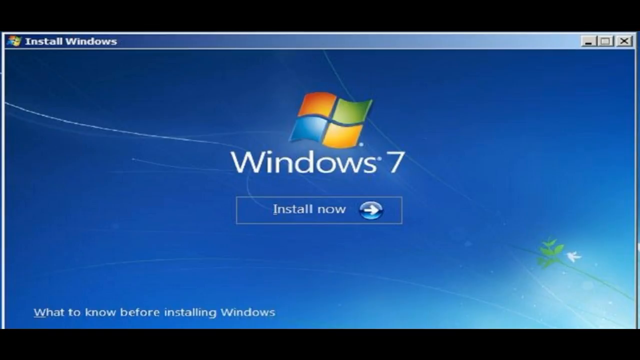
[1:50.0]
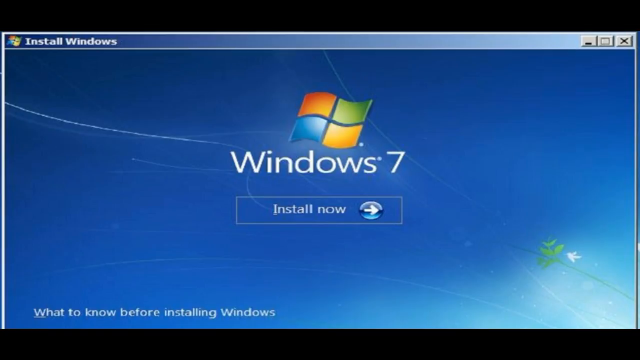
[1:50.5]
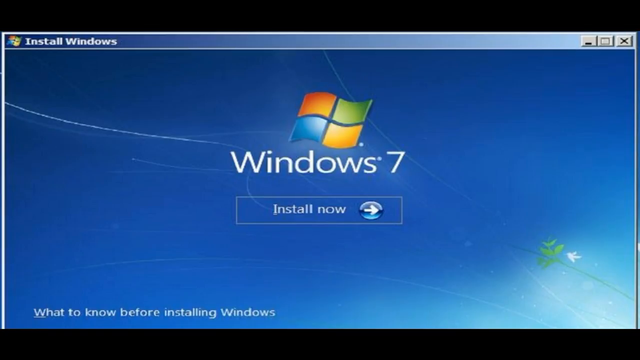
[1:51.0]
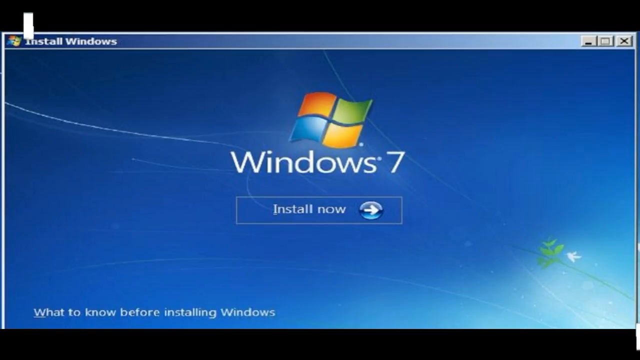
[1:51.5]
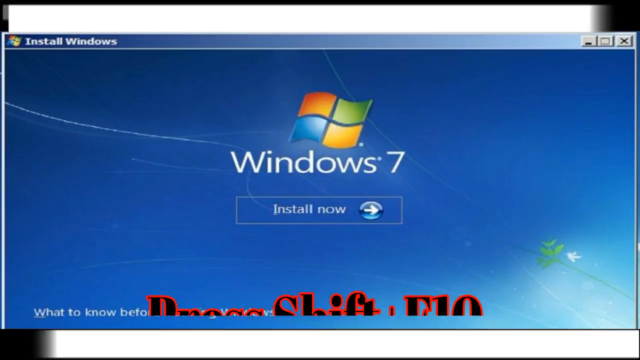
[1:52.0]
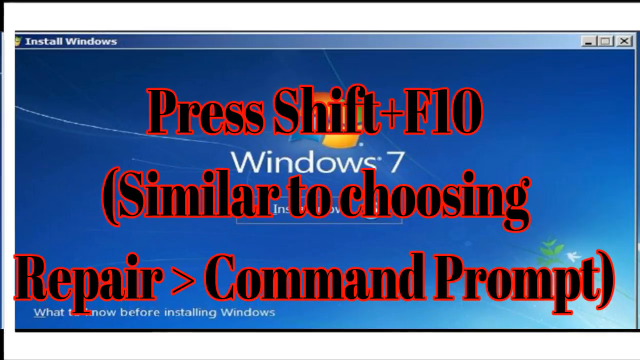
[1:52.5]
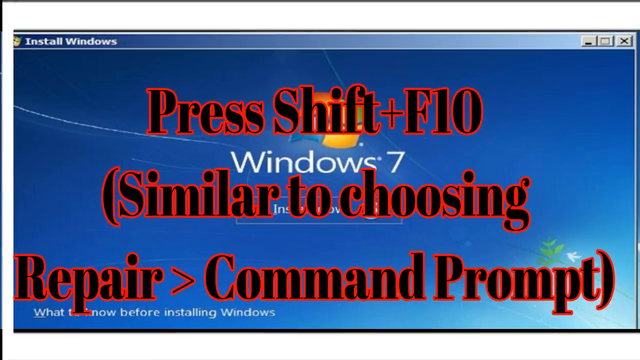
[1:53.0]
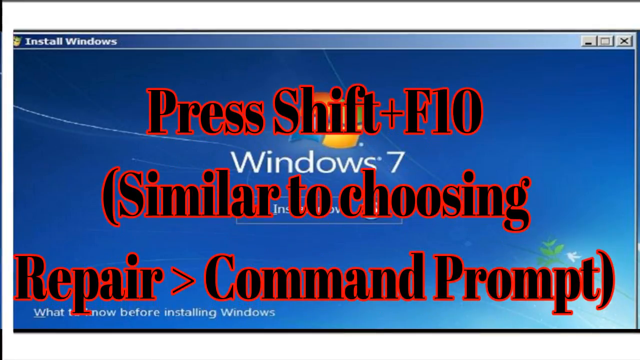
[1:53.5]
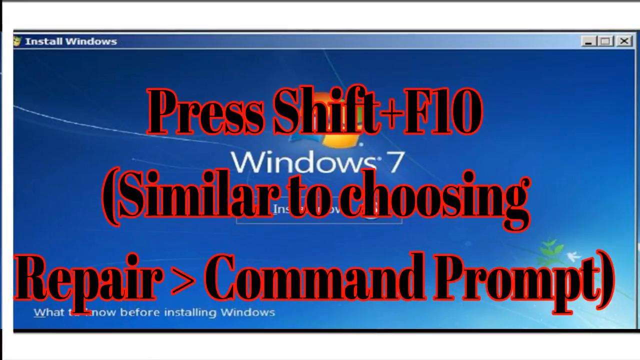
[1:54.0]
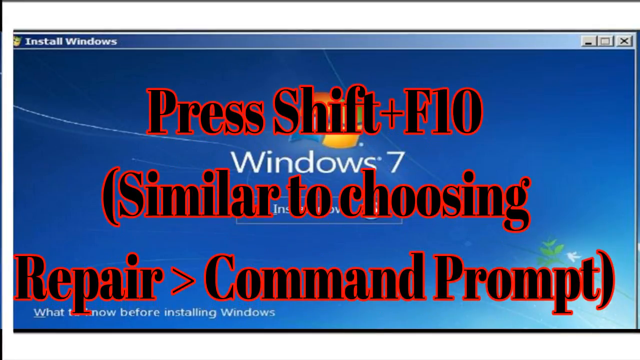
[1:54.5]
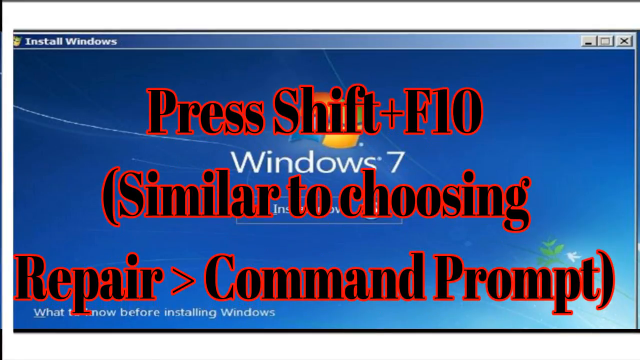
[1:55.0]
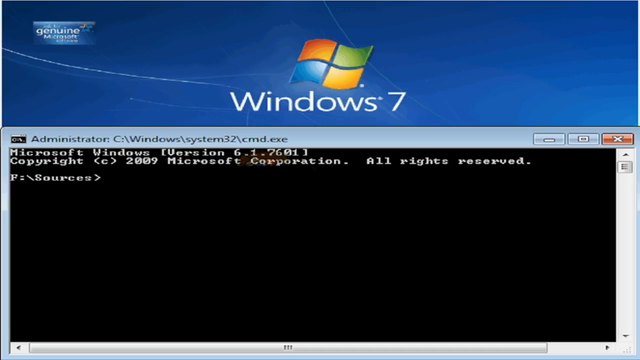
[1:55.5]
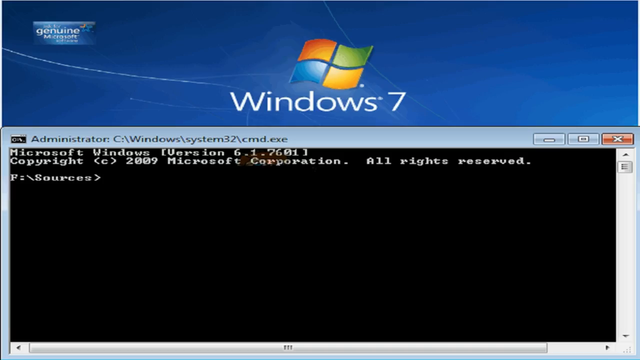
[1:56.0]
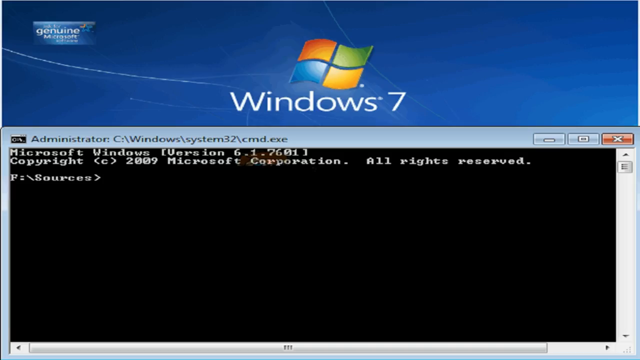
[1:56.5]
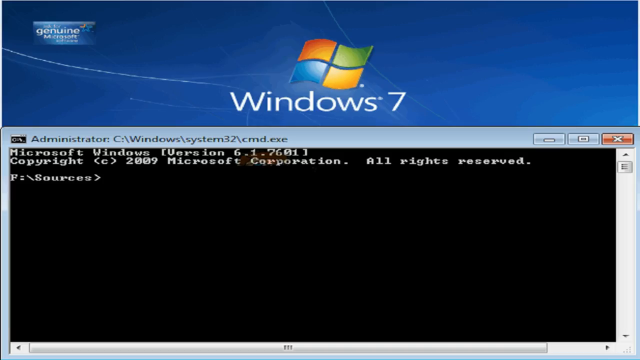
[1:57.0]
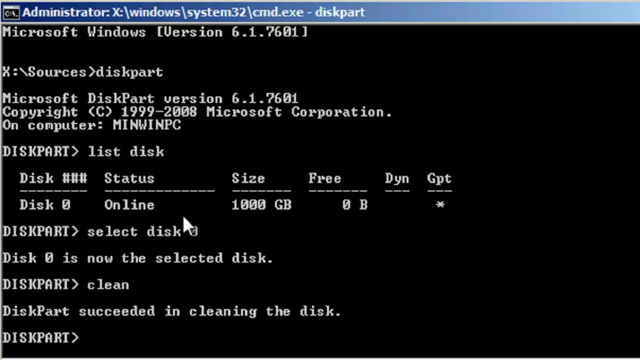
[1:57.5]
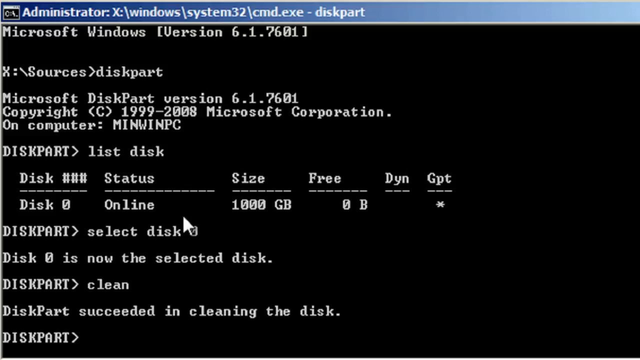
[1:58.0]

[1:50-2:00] A screenshot taken from the Install Windows prompt for Windows 7 shows a button in the centre that says "Install Now", with a round blue button on its right containing a right-facing white arrow. Text appears from below and fills the centre of the screen, in black with a red outline, reading "Press Shift plus F10 (similar to choosing Repair> Command Prompt)". The video then transitions to a screenshot of the CMD Windows control panel, with a black background and white text showing some information about Windows disk part.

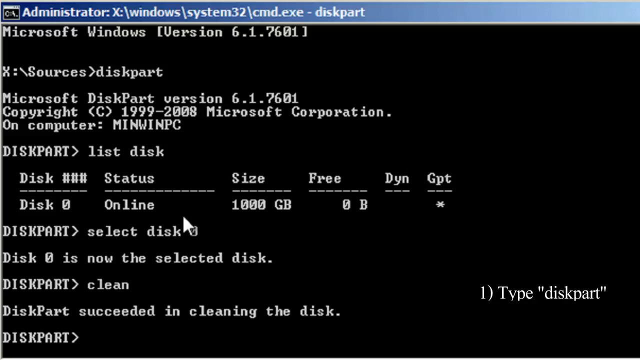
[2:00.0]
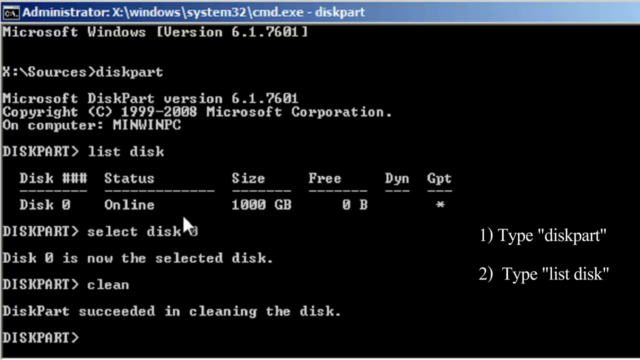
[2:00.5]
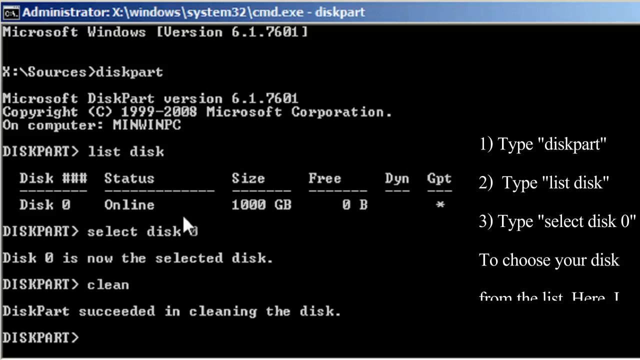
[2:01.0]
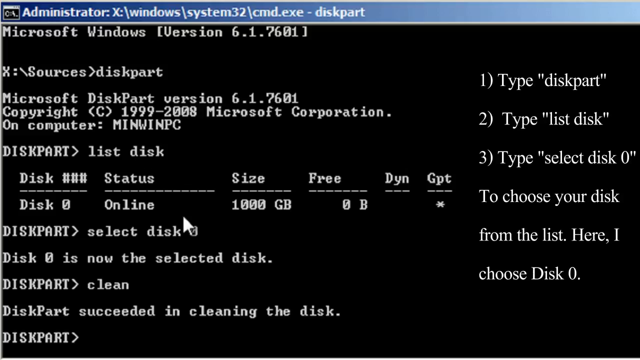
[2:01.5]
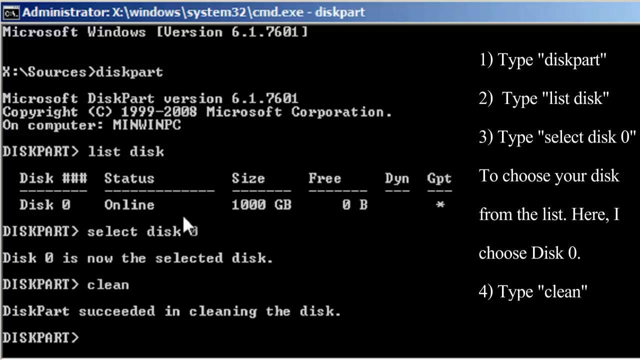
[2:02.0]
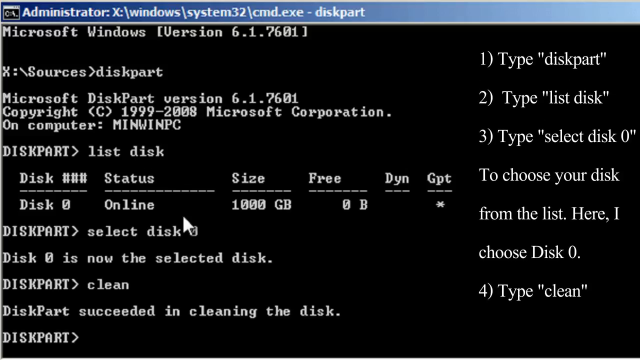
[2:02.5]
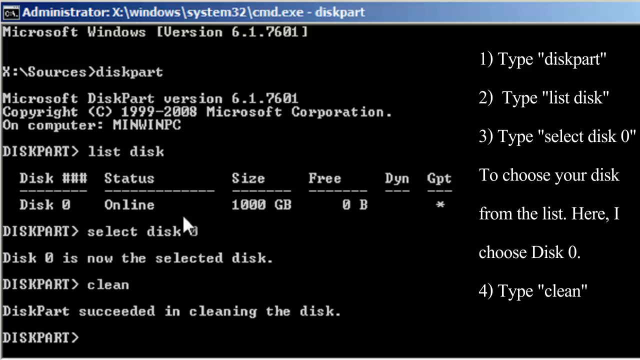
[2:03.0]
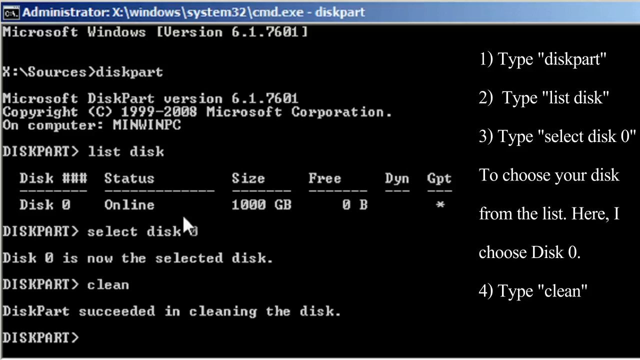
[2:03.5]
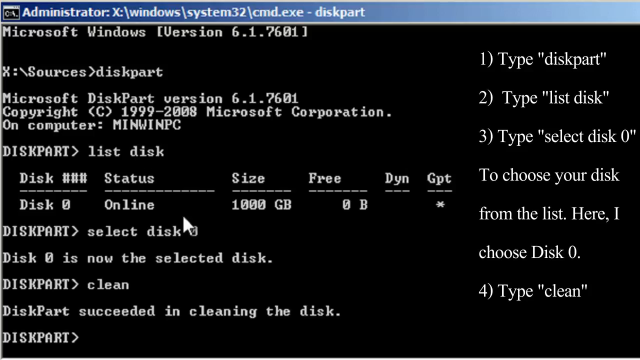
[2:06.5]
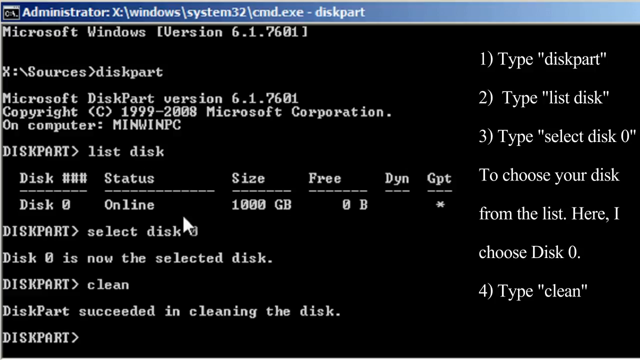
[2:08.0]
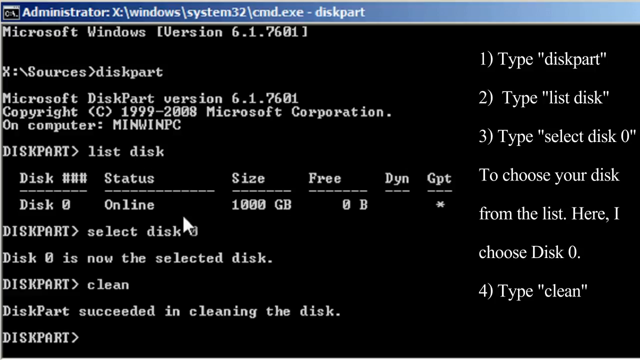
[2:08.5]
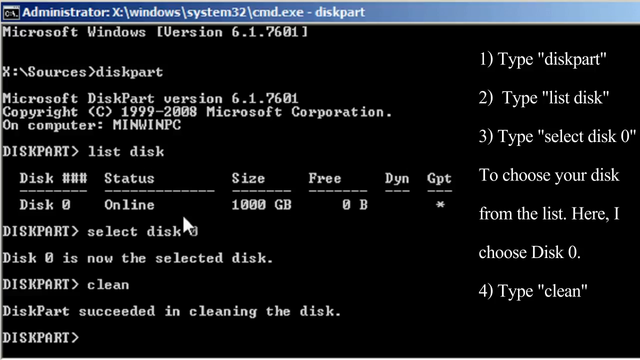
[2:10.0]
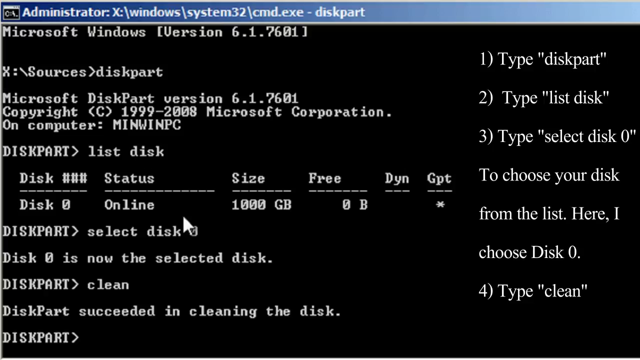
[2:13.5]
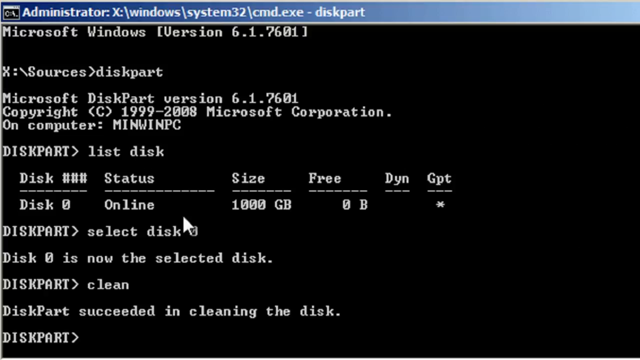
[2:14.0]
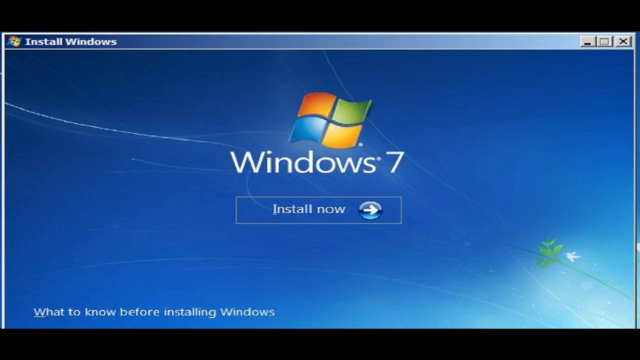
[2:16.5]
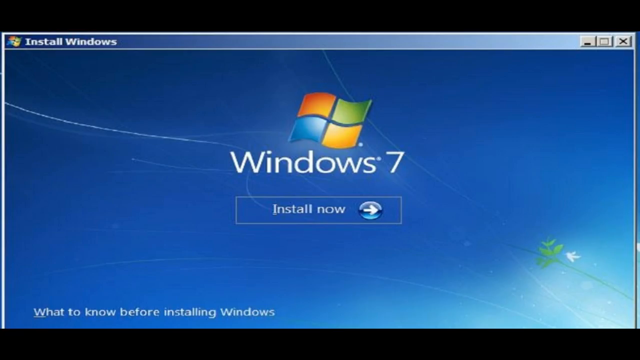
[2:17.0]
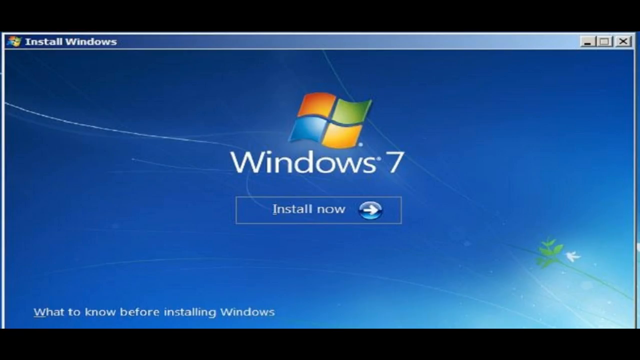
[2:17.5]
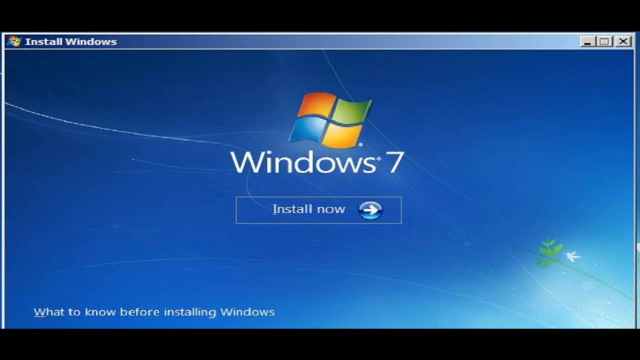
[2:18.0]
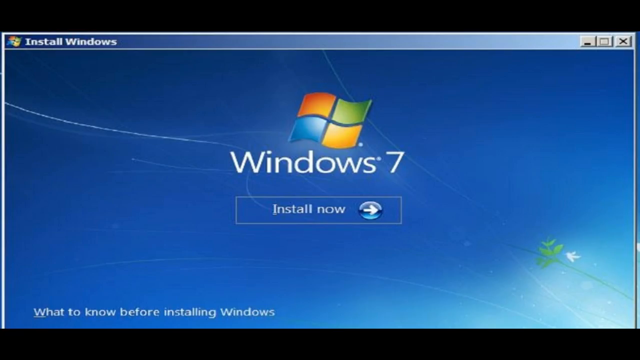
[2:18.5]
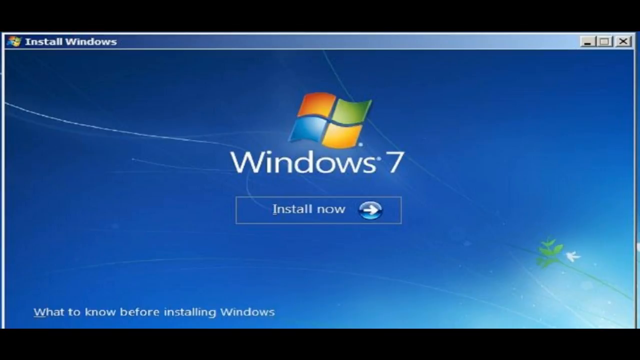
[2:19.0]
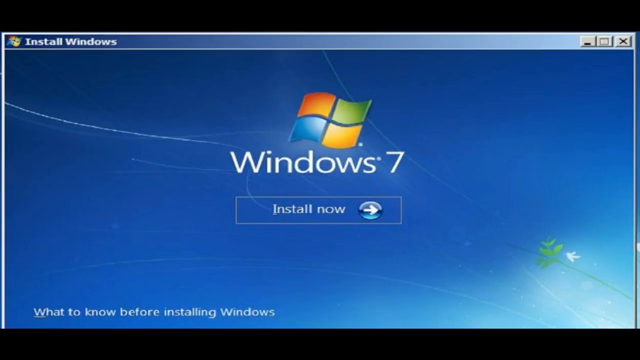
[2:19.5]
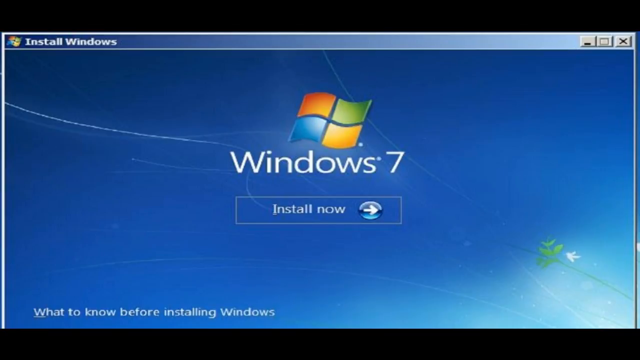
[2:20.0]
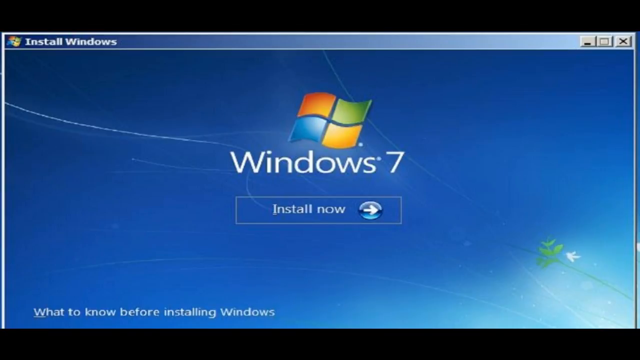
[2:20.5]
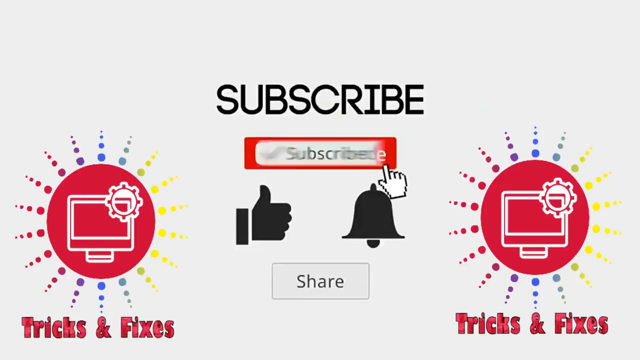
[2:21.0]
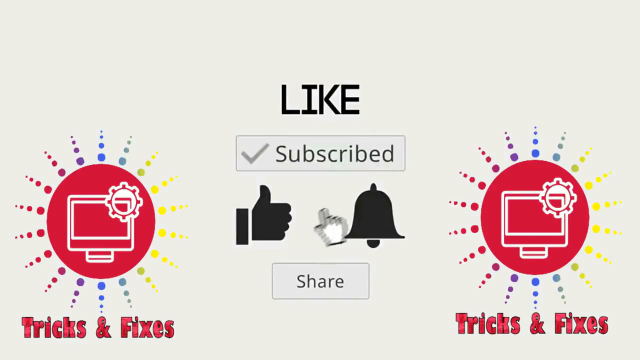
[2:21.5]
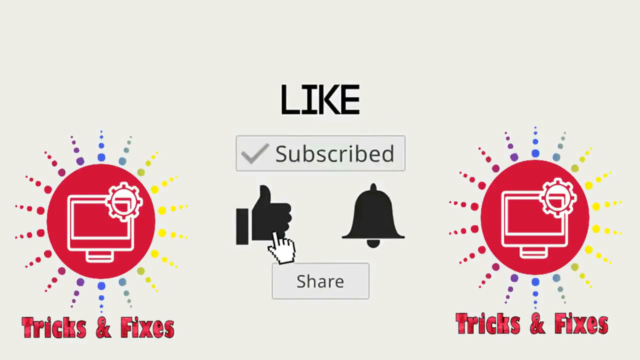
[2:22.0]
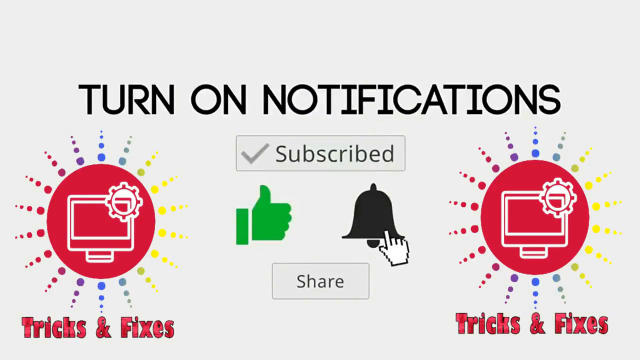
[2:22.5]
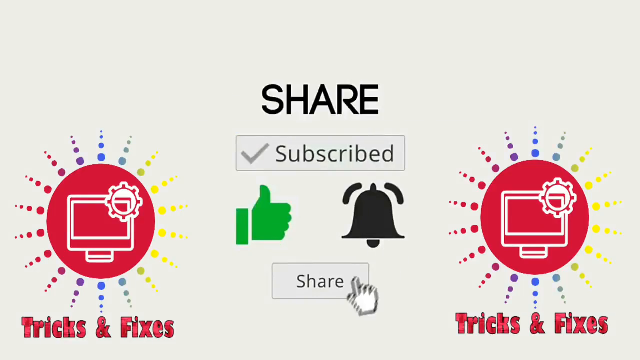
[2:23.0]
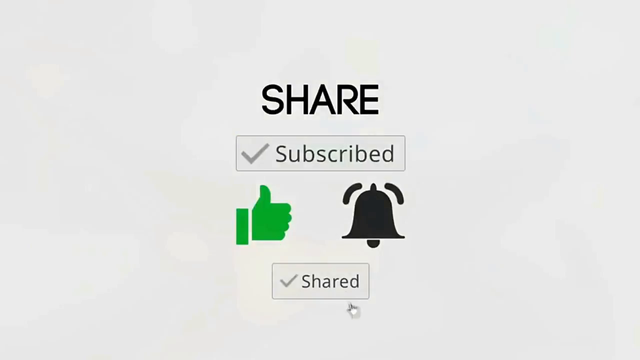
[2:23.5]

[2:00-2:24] A screenshot shows the Windows CMD control panel, with a black background and black text; the text concerns the disk file source. On the right side, overlaid text appears, moving slowly from the bottom of the screen upwards until it fills the right side. It reads "1) type disk part 2) type list disk, 3) type select disk zero. To choose your disk from the list, here I choose disk zero. 4) type clean." It stays on screen for about 10 seconds before disappearing. The video then transitions to a screenshot of the Install Windows prompt for Windows 7, with an Install Now button. An outro screen follows, the same as the intro screen, with a hand-icon cursor moving. The cursor clicks the Subscribe button and it changes to "Subscribed", clicks the thumbs-up icon and it changes from black to green, clicks the bell icon and it changes from a normal bell to a bell with a look of motion, and clicks the Share button and it changes to "Shared".